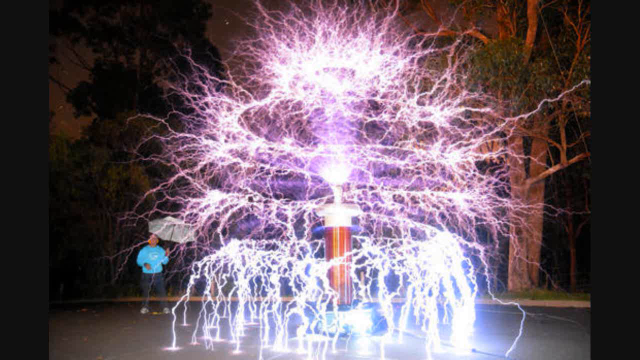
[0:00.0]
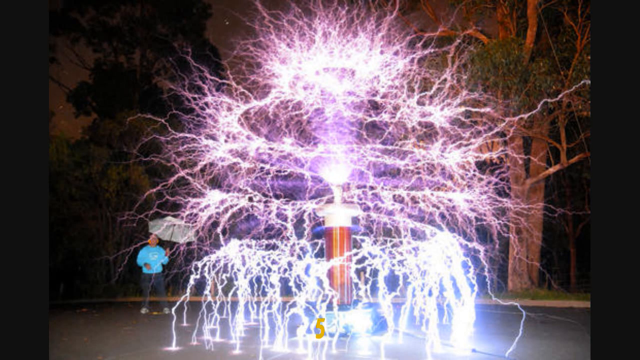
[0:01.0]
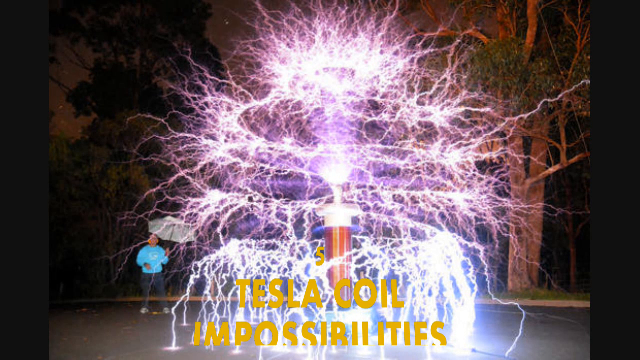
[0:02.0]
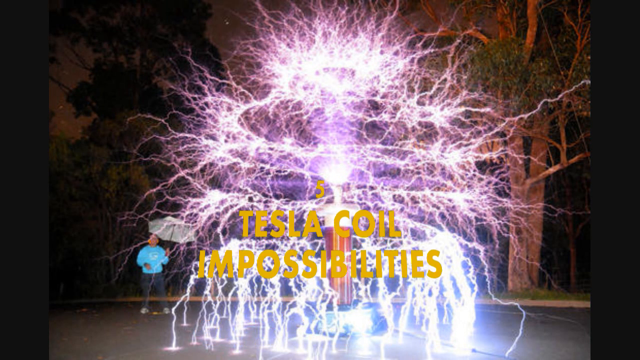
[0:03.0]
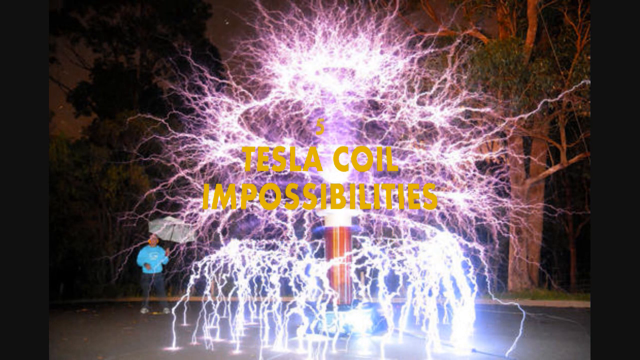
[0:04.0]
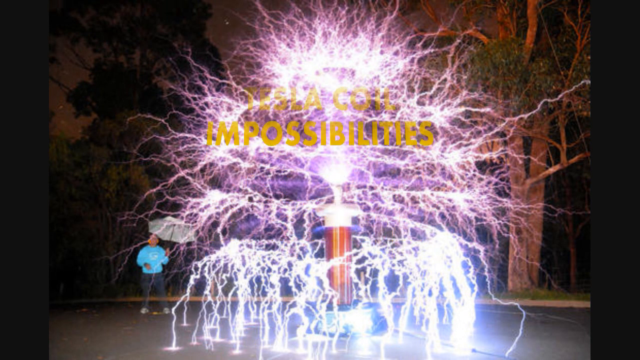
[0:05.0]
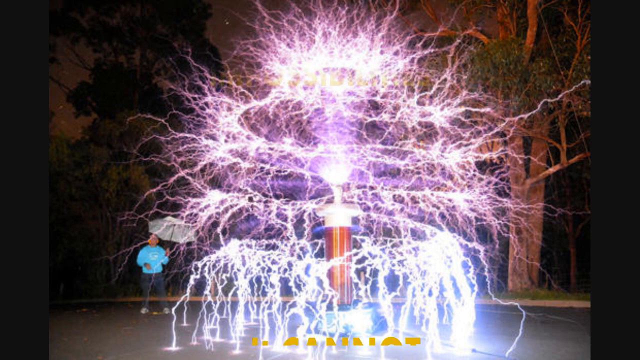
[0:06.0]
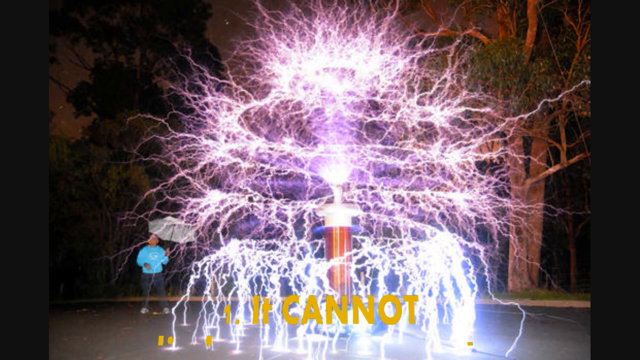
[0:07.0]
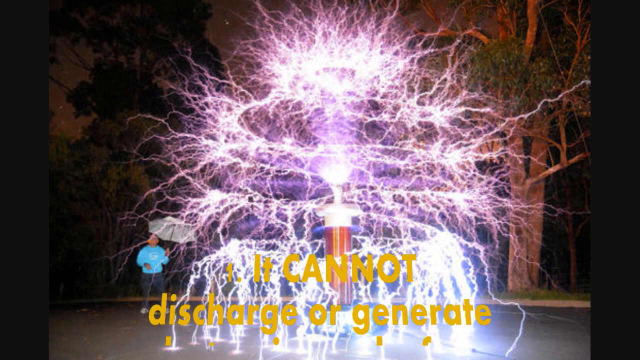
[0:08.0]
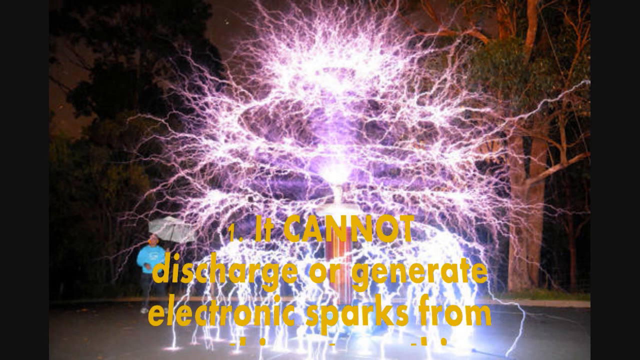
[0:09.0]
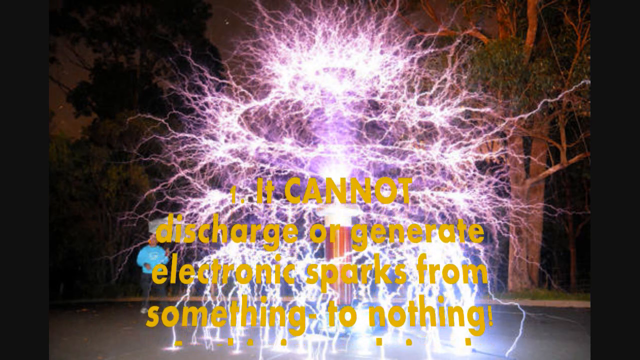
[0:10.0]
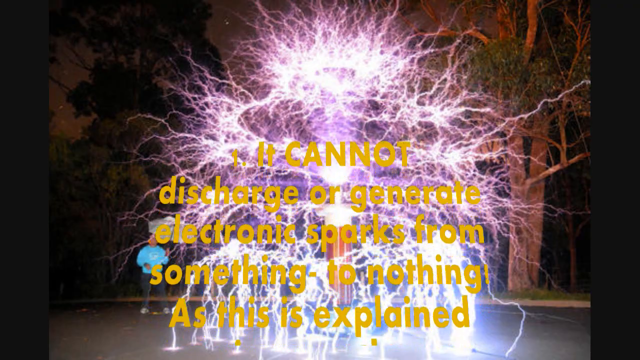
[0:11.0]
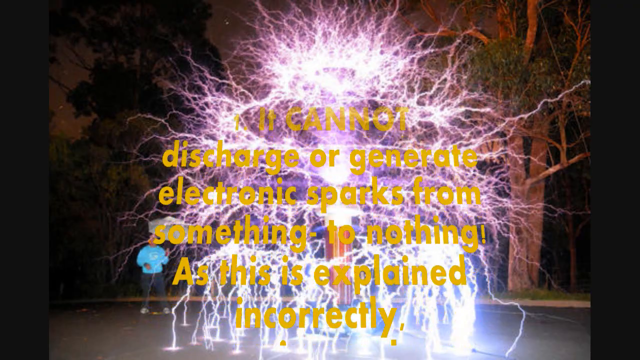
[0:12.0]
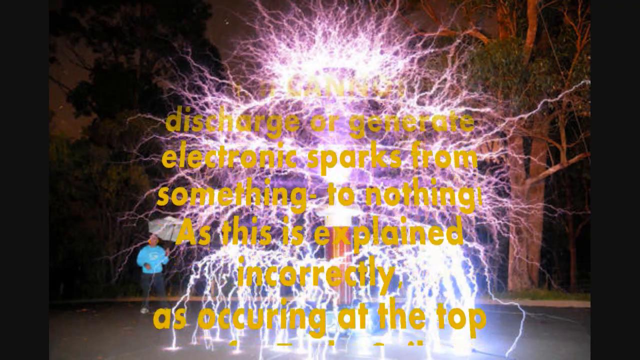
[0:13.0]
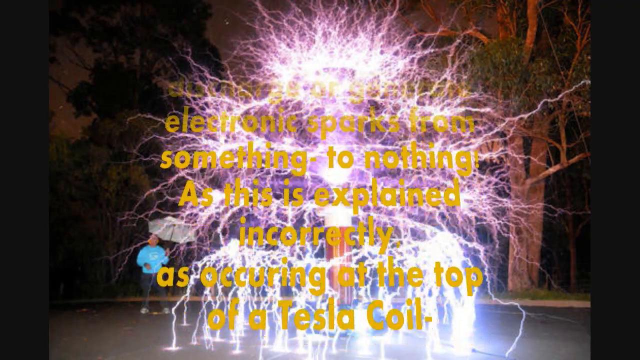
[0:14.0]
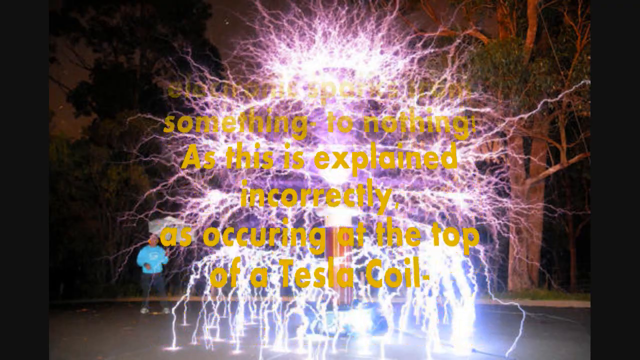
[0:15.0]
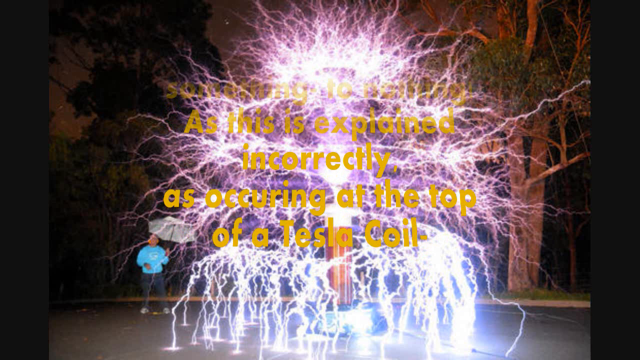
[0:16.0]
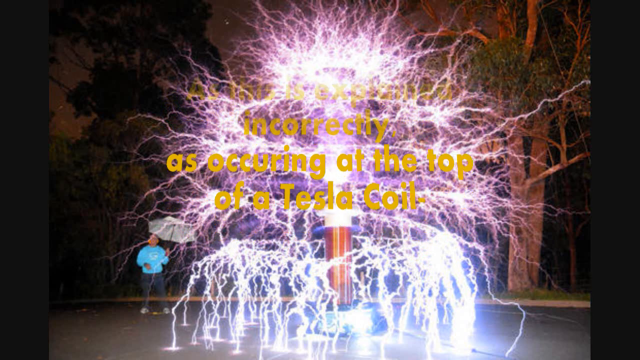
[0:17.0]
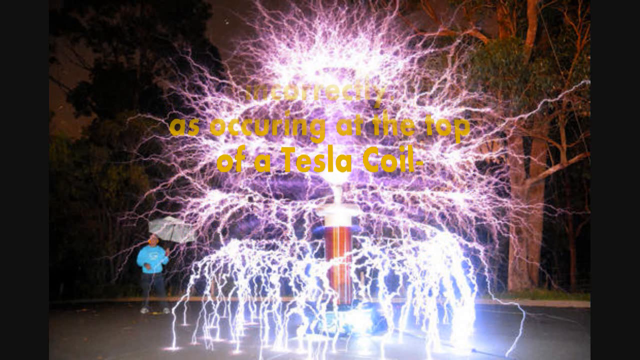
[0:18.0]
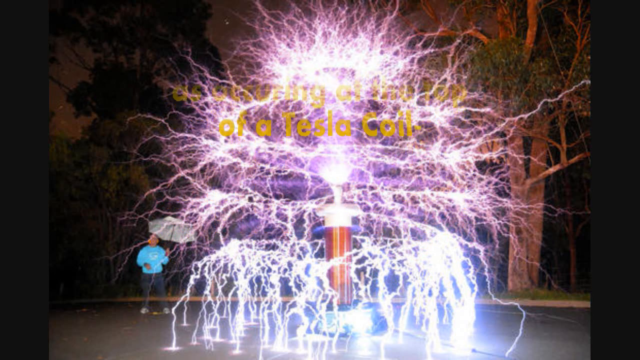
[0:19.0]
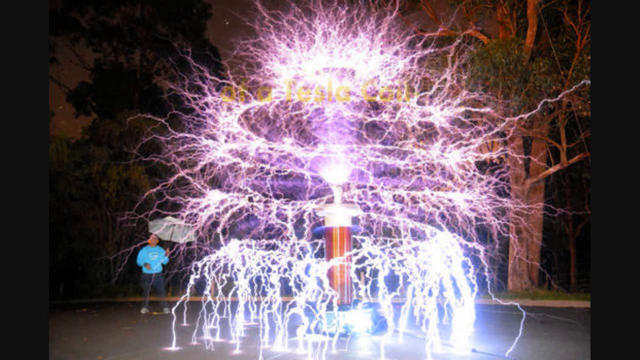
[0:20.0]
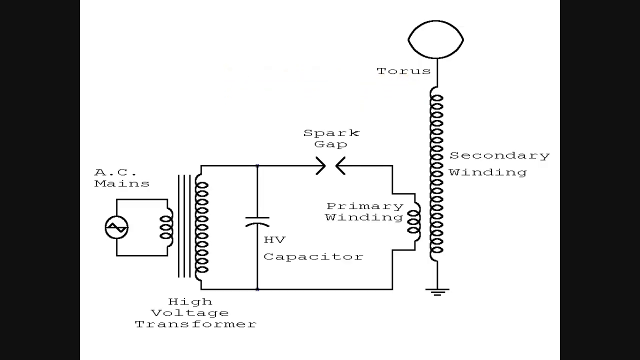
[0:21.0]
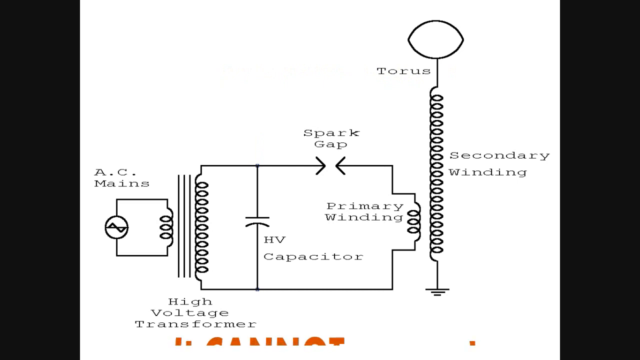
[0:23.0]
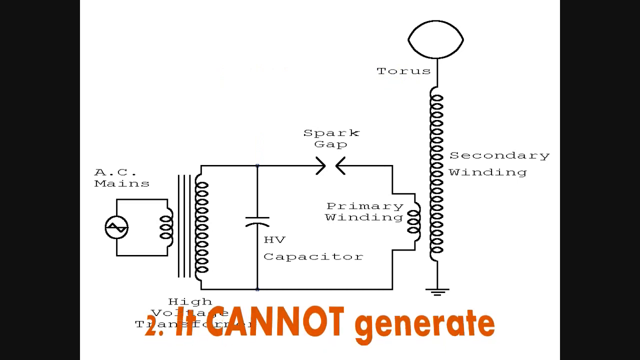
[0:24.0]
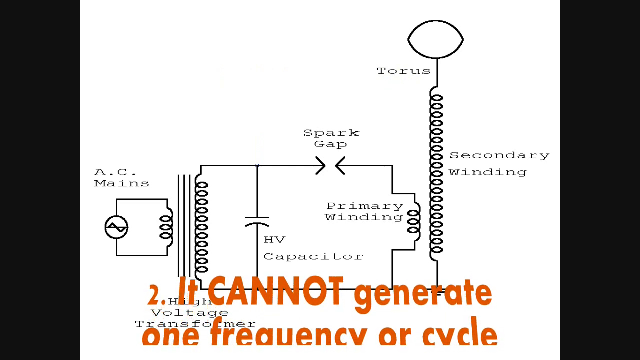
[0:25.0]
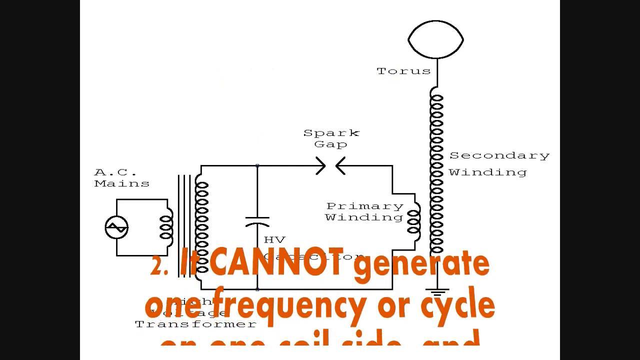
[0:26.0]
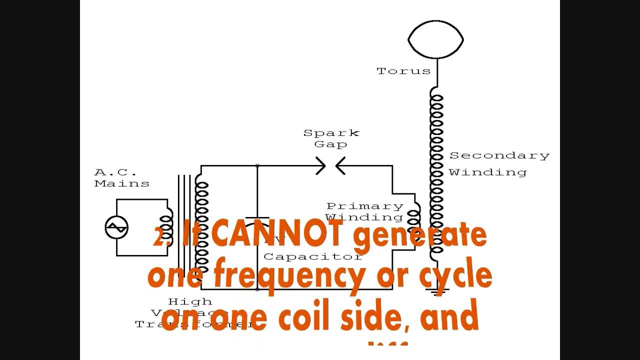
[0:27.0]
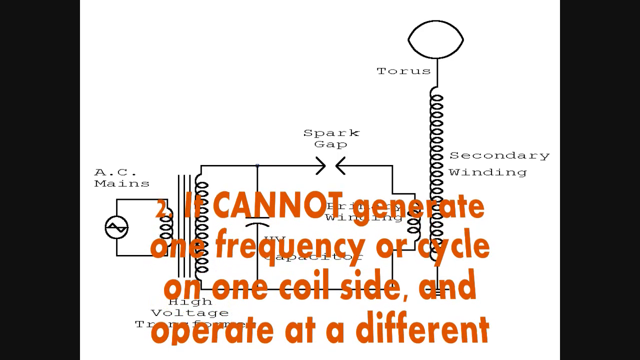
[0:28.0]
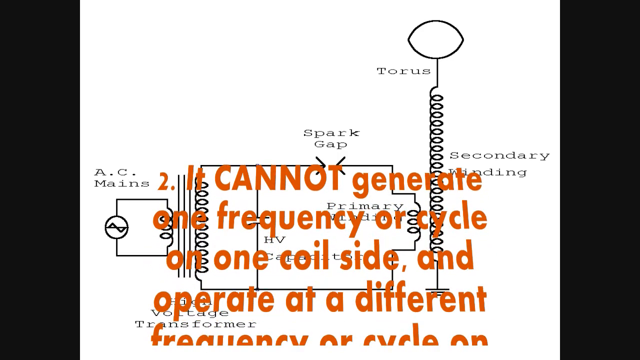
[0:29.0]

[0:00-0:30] A video about the device known as a Tesla coil opens with a photographic image of the device, which is in effect generating lightning. It is built outdoors and is lighting up trees in the background. A man holding a gray umbrella watches it from a distance. The video's title, "Tesla coil impossibilities", appears in hard-to-read yellow text, and there is a reference to "As this is explained incorrectly". The view moves to a diagram of a Tesla coil drawn in black and white, with labels for the AC mains, the high voltage transformer, a high voltage capacitor, the spark gap, the primary winding, the torus and the secondary winding, along with a few drawings of the device. A second piece of text follows, stating "it cannot generate one frequency or cycle on one coil side and operate at a different frequency".